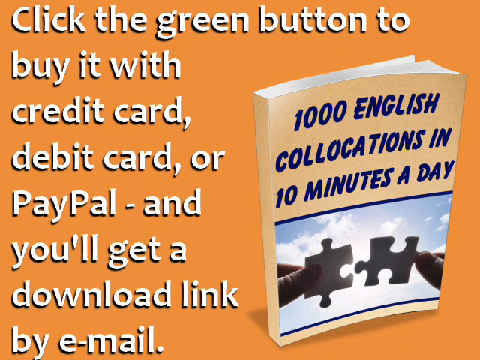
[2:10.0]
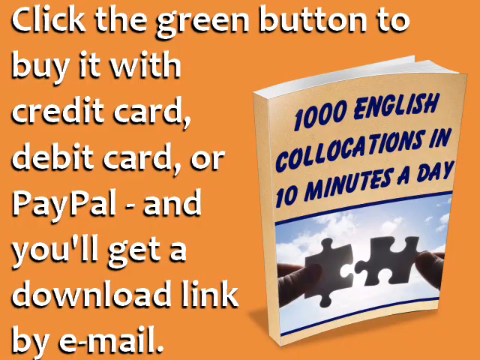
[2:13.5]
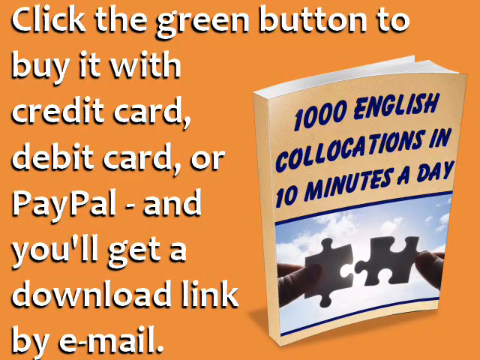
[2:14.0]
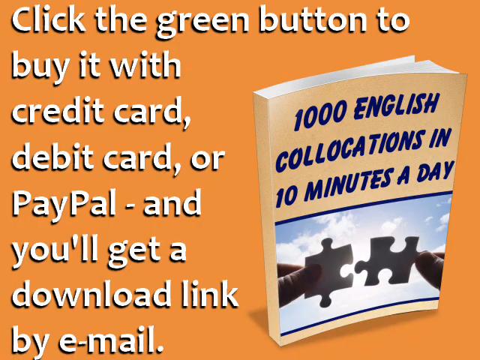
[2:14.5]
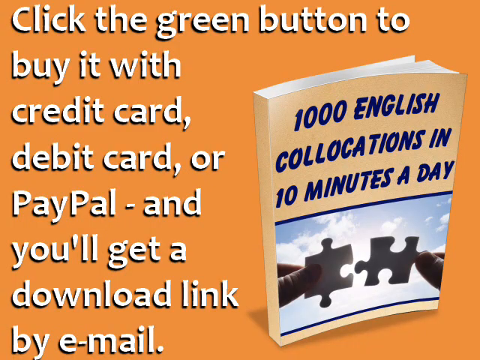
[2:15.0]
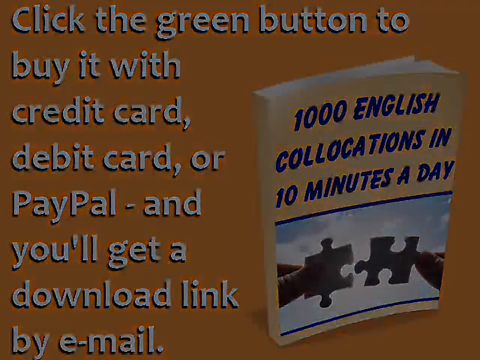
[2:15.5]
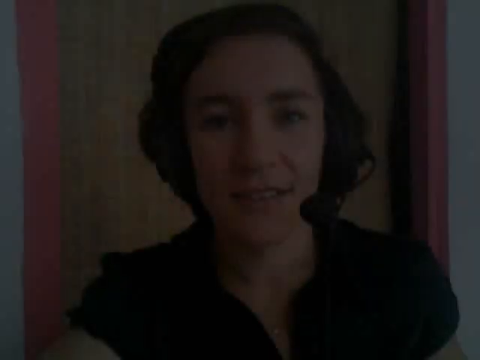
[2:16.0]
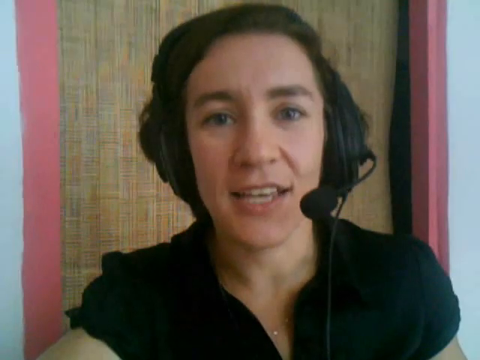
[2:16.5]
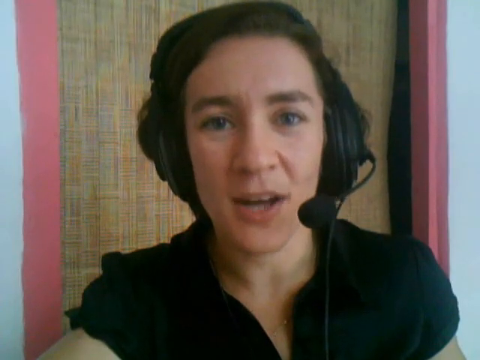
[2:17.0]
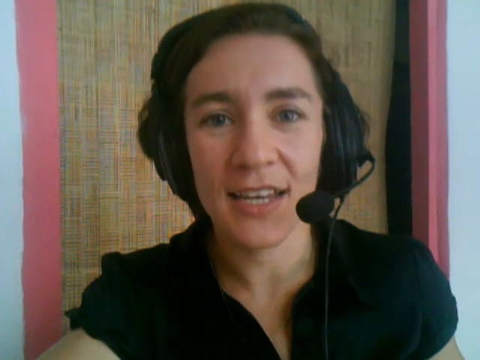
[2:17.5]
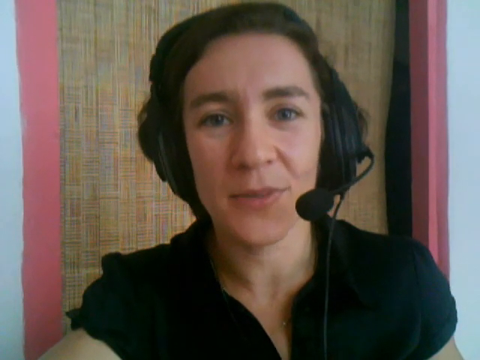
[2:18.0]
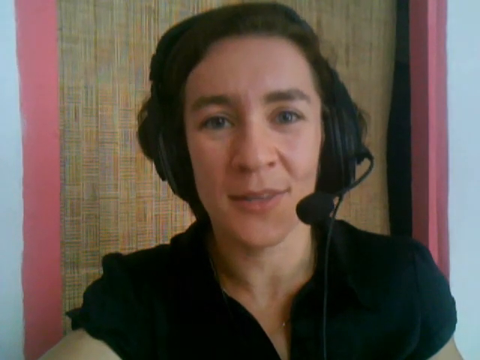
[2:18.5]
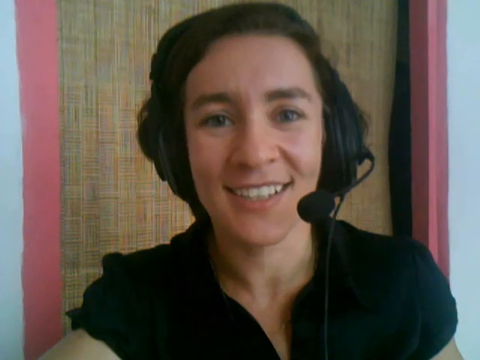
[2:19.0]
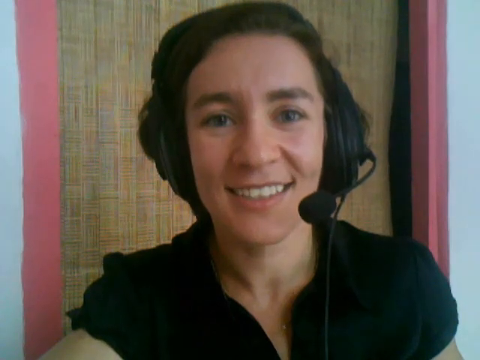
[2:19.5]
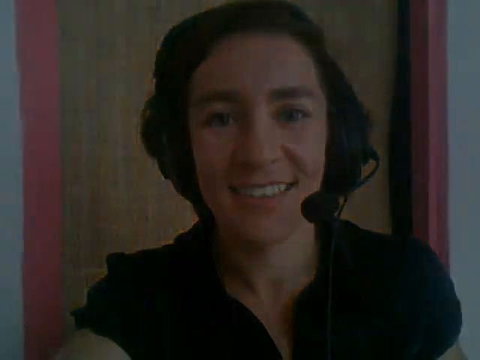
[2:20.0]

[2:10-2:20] The final part says to click the green button to buy with credit card, debit card, or PayPal, get a download link by email, and download the e-book to learn English in just 10 minutes a day. At the end, a young boy appears, seemingly describing or offering something about the books.